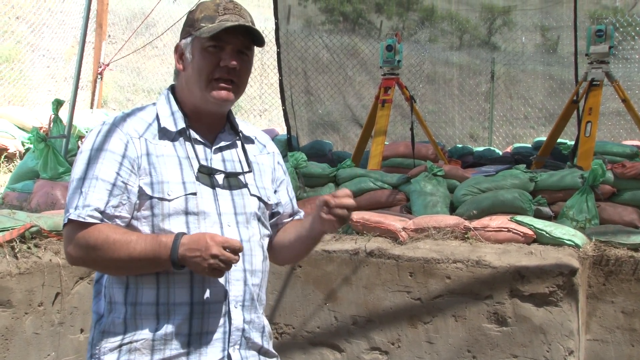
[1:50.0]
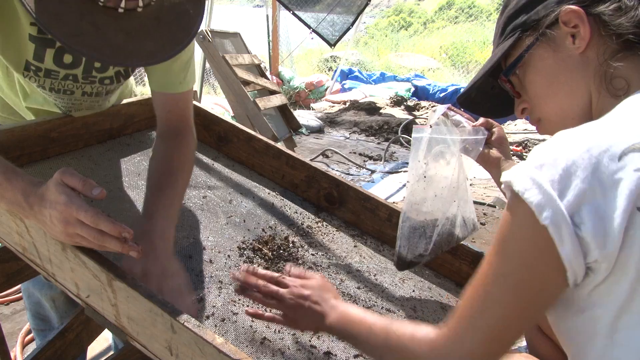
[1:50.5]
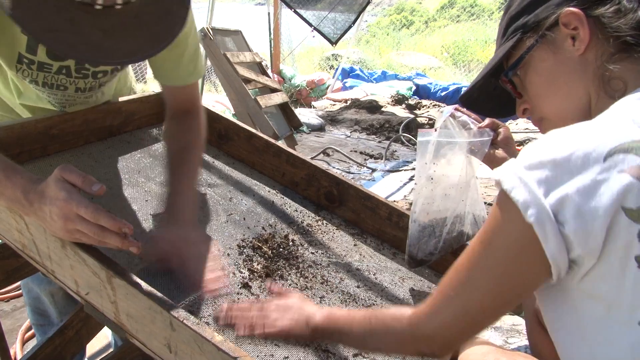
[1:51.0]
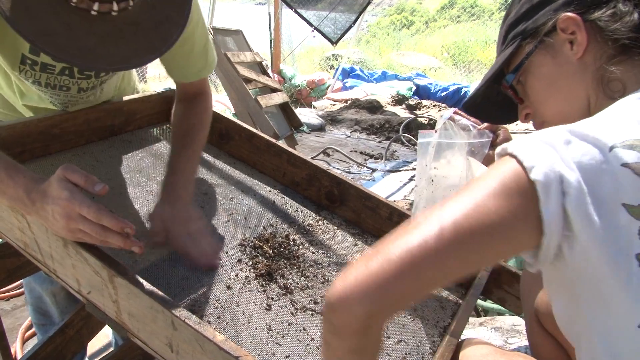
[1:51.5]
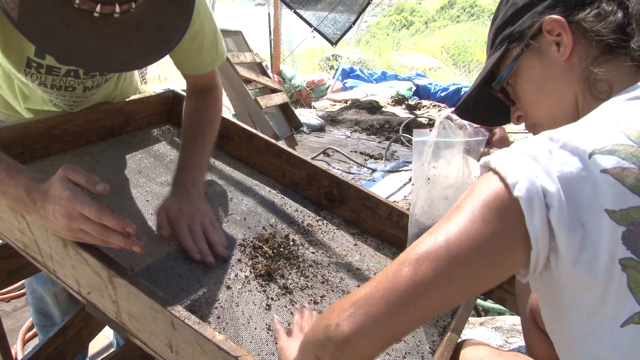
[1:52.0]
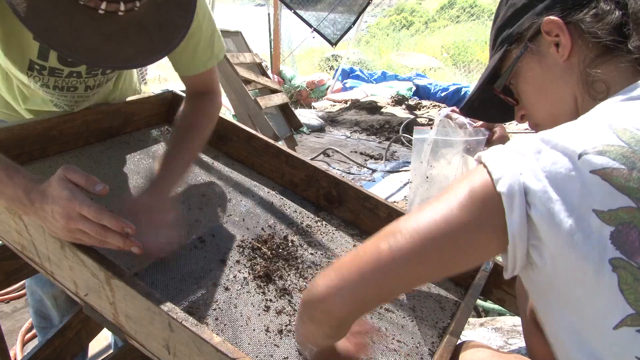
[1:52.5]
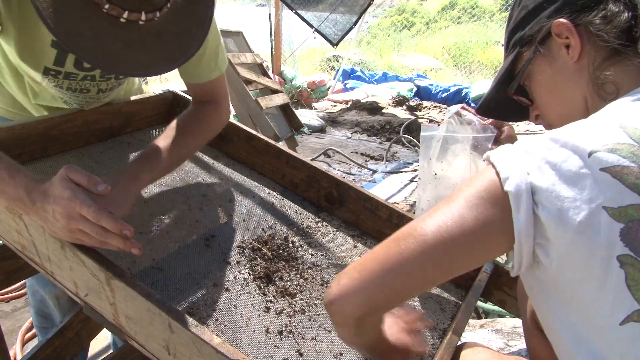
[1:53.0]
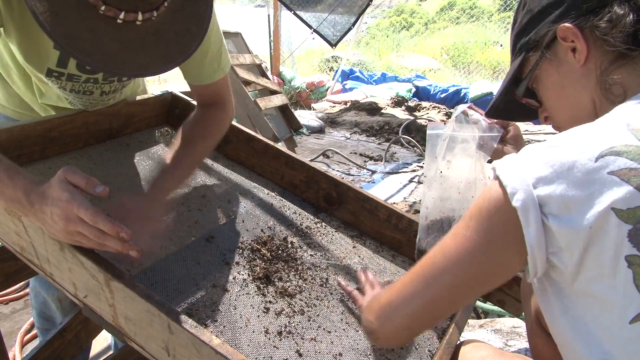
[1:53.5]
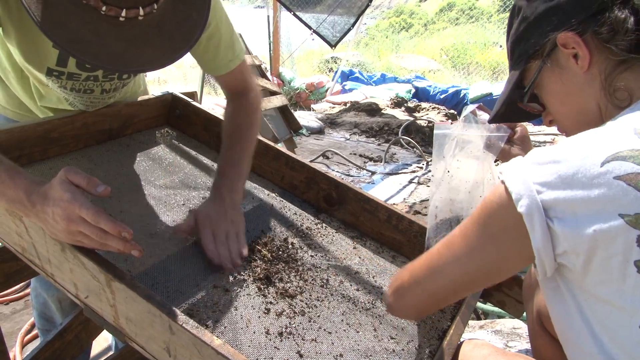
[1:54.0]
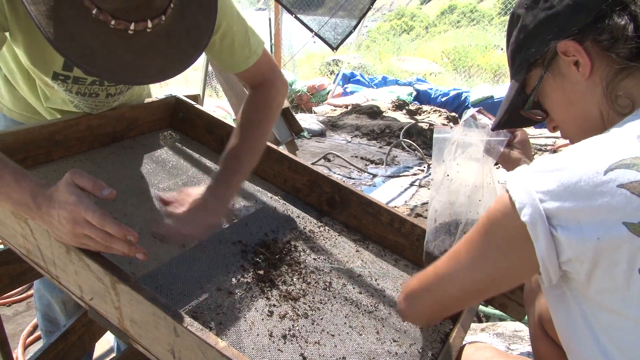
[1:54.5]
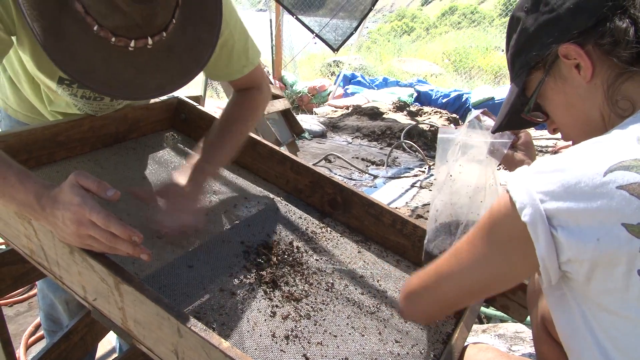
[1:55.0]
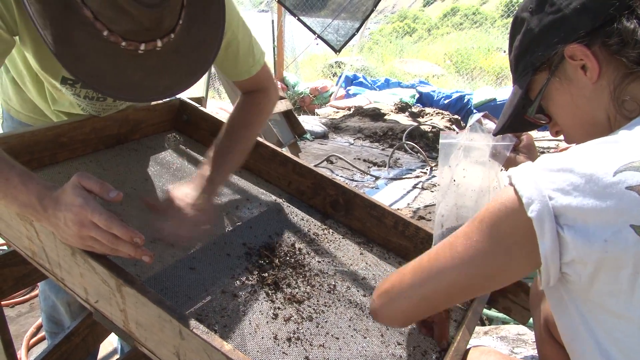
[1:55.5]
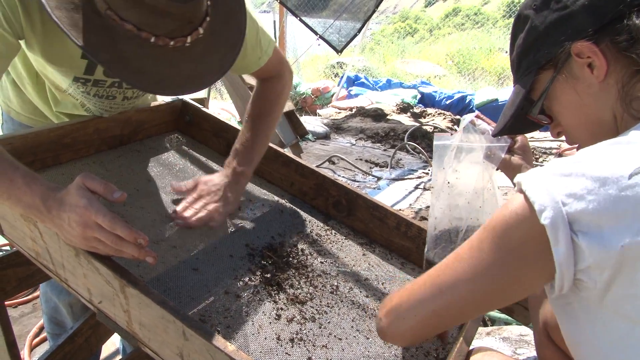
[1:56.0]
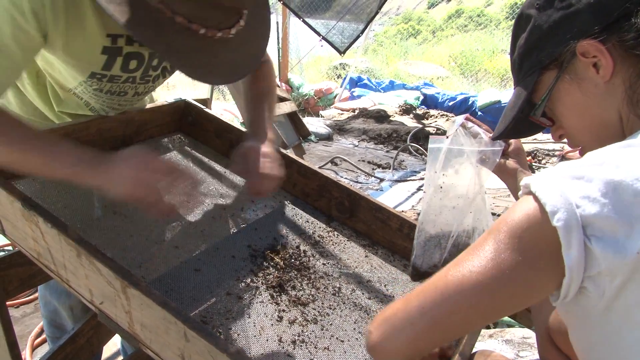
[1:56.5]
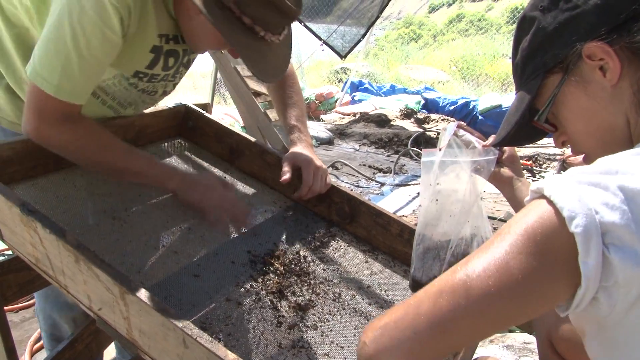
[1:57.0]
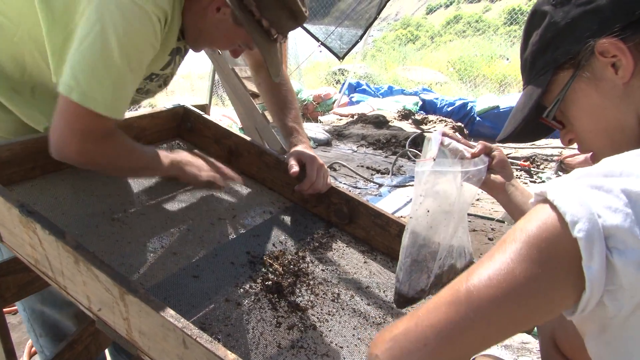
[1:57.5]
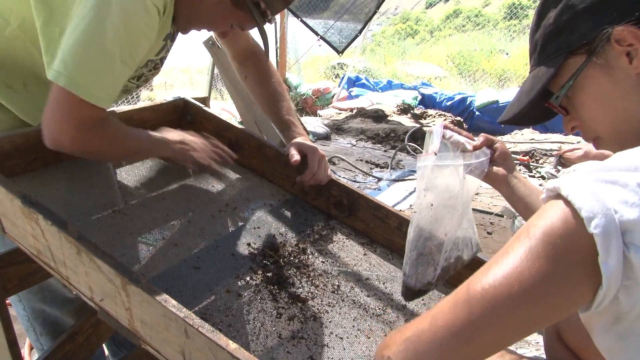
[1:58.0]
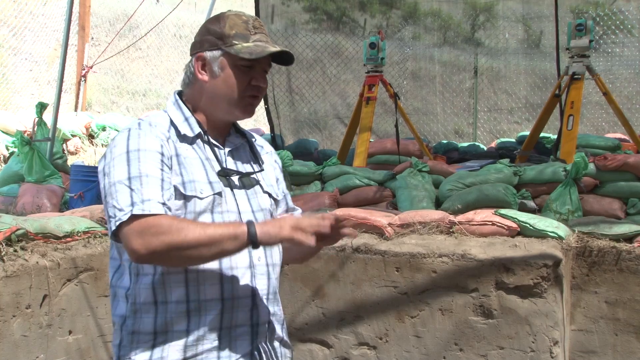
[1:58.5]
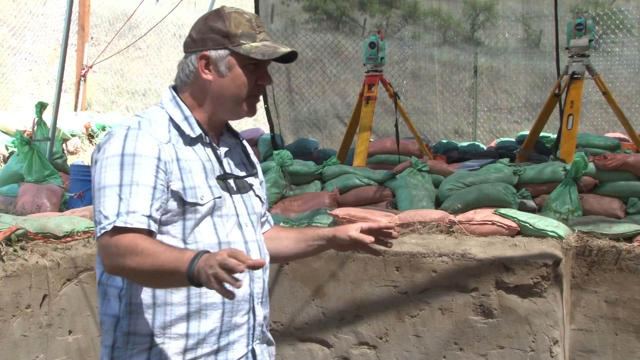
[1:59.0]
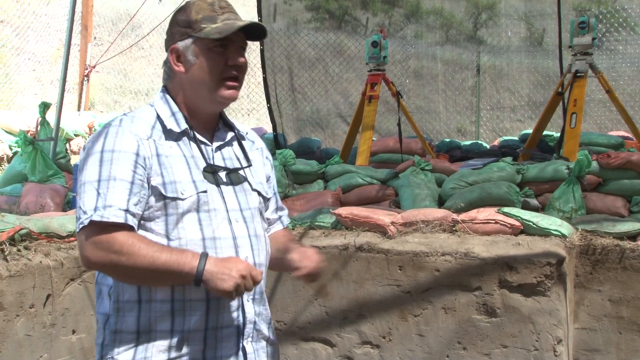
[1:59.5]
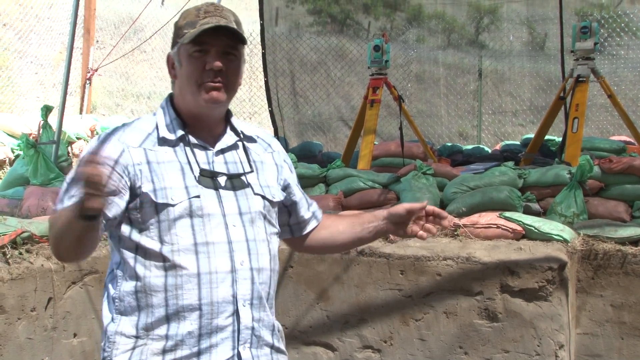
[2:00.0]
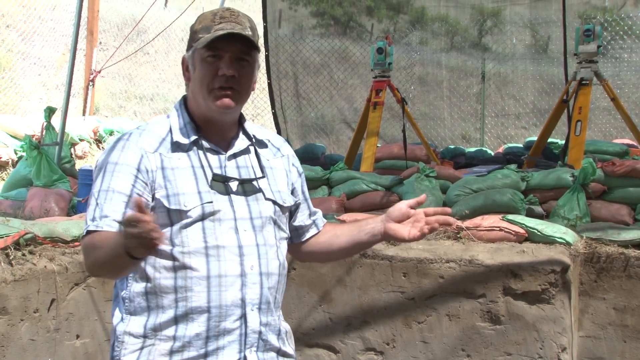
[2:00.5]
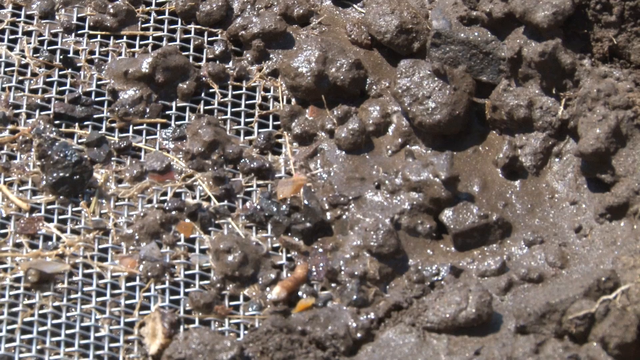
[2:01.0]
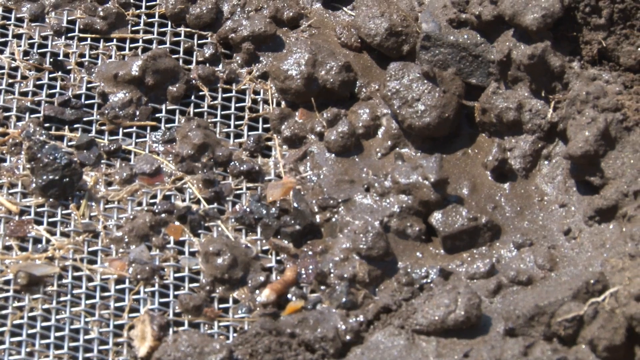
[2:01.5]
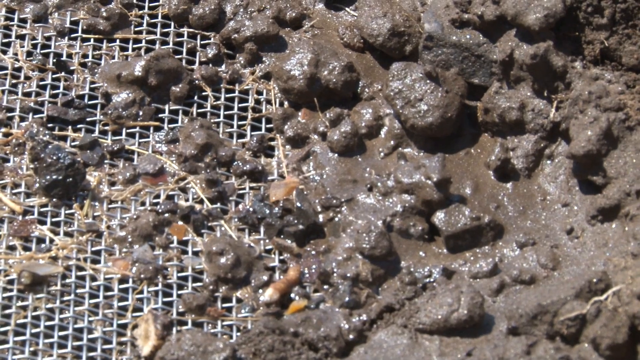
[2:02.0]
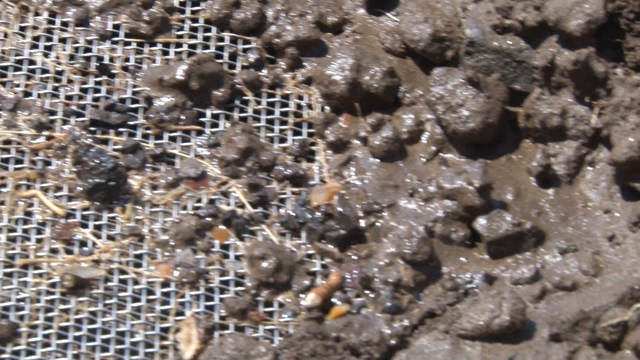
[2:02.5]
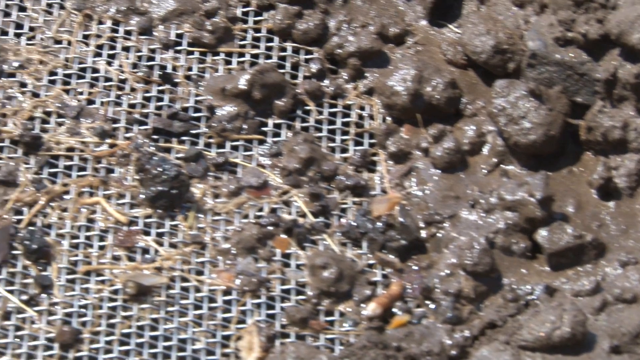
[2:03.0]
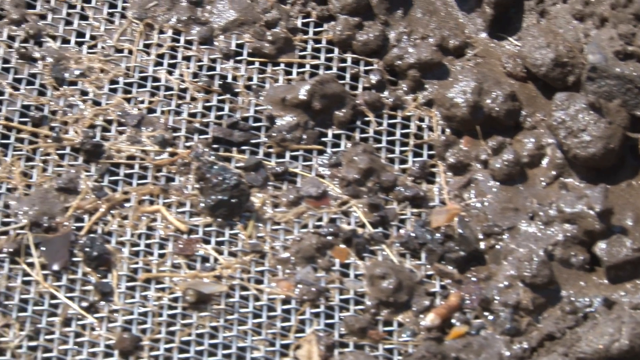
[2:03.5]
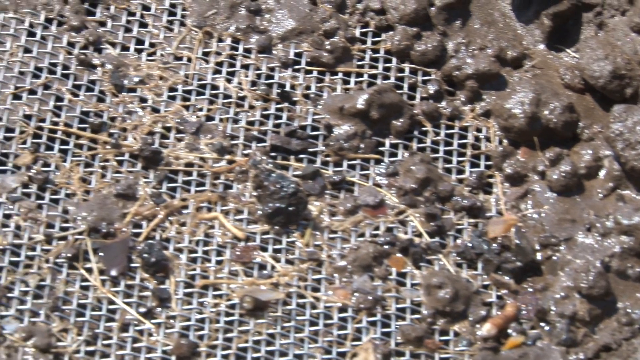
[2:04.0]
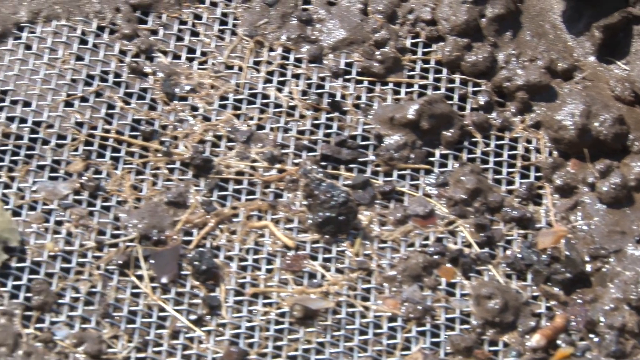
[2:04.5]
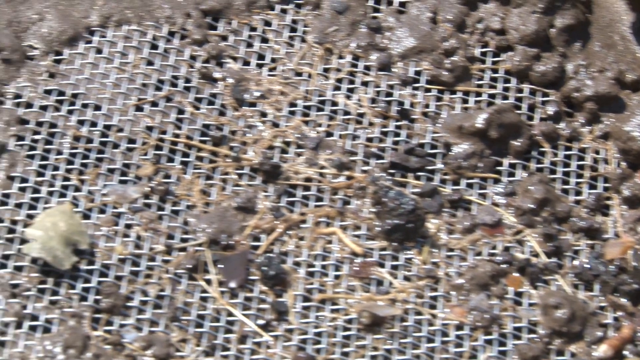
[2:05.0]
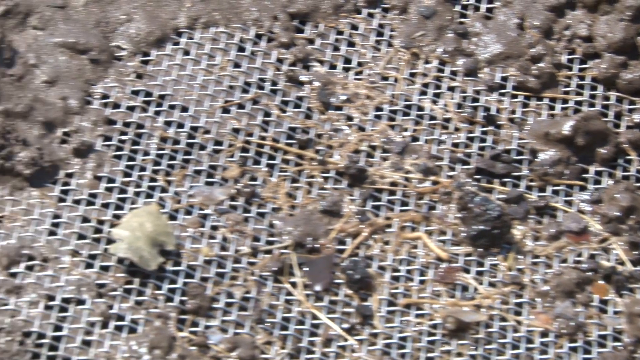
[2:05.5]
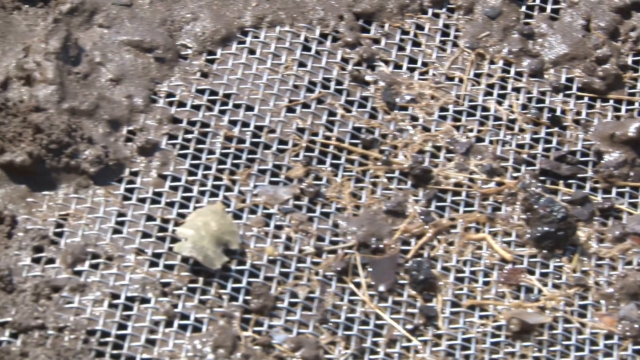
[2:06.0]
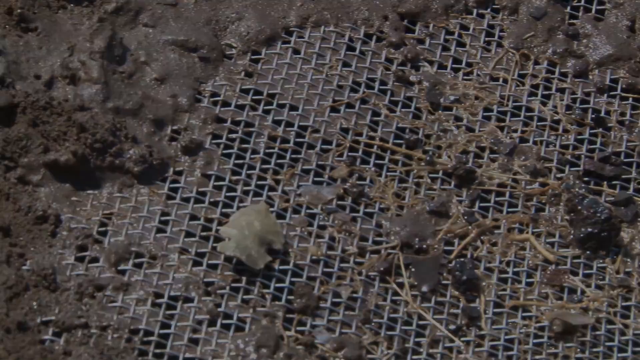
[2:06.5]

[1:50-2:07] The professor speaks, with the green sandbags, the tripods with what look like cameras on top, and the netting in the background; his sunglasses are off his face, hanging on his neck. Two students are shown: one in a yellow-lime shirt with a hat, and on the other side of the screen a lady in a black baseball cap and glasses holding a Ziploc bag. They sift through some of the dirt with a sifter, looking for something specific. The view returns to the professor speaking to the camera, then shows mud in a sifter, and the screen fades to black. It is a sunny day with a lot of reflected sunlight. While the two students work at the sifter, a little vegetation is visible to the right or upper part of the screen, along with a blue tarp and some sort of wood box, possibly another sifter.